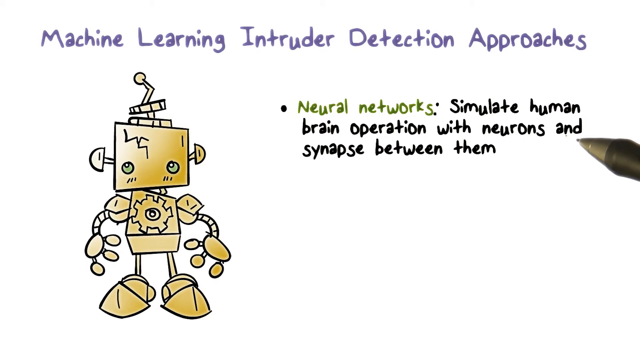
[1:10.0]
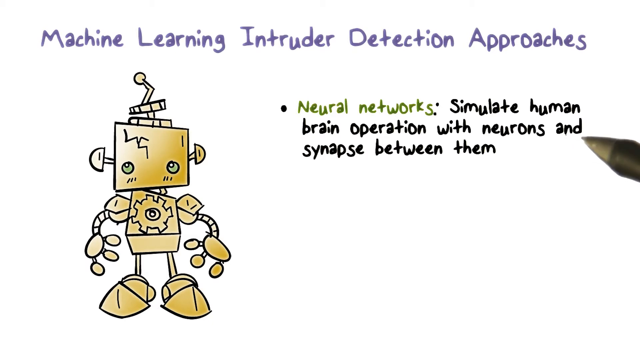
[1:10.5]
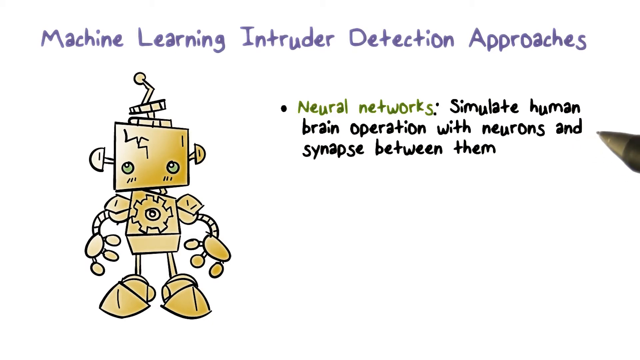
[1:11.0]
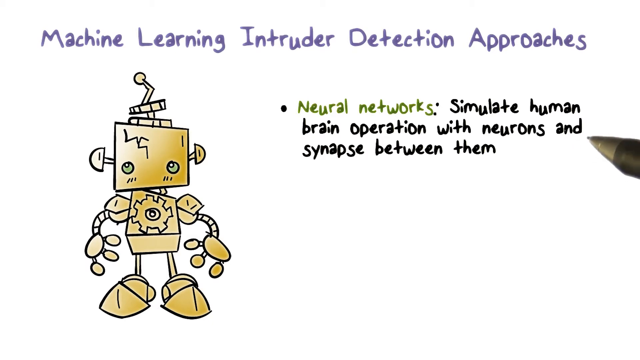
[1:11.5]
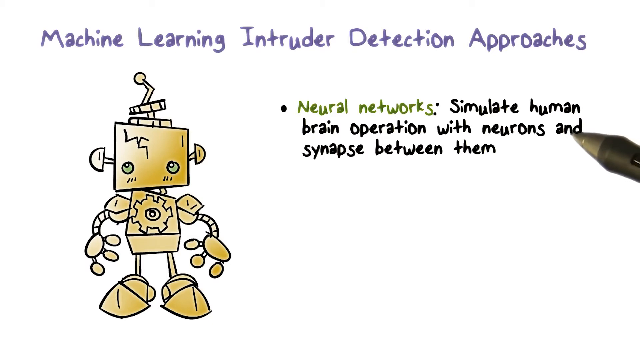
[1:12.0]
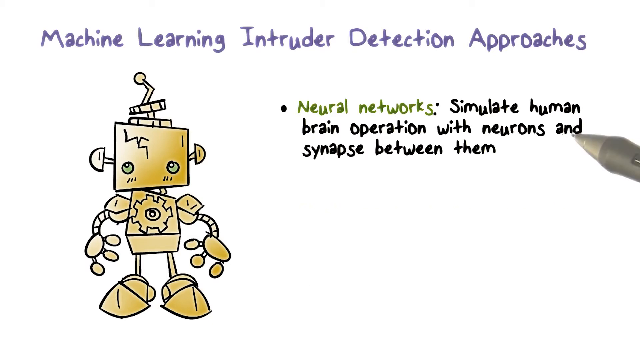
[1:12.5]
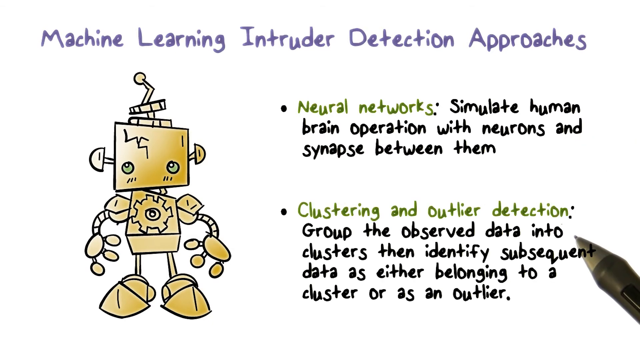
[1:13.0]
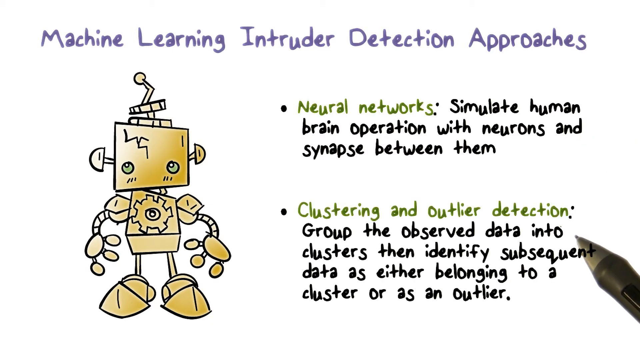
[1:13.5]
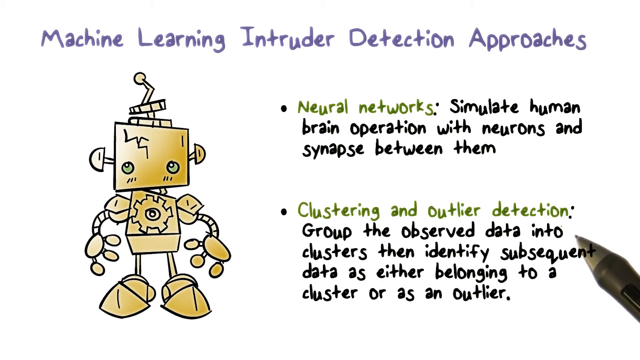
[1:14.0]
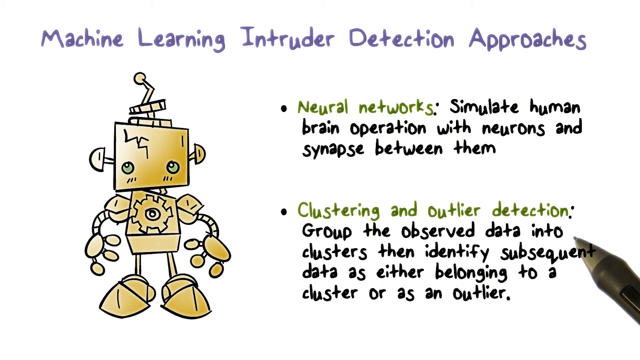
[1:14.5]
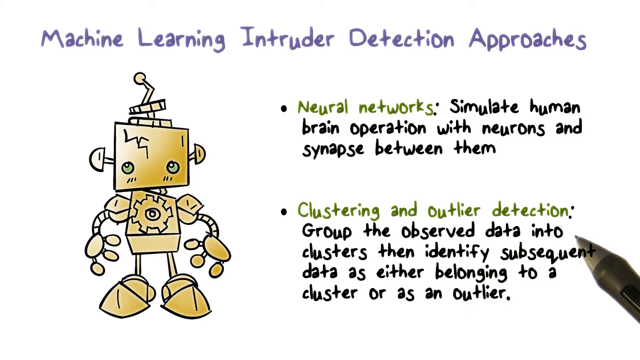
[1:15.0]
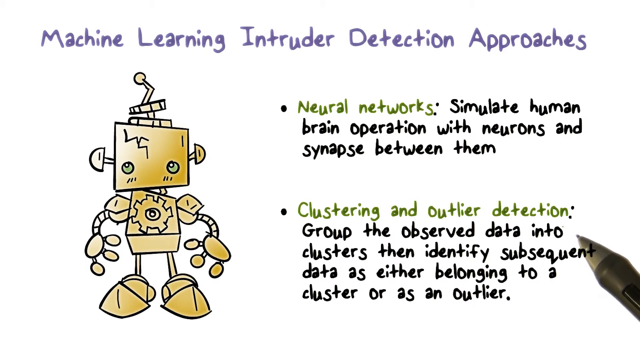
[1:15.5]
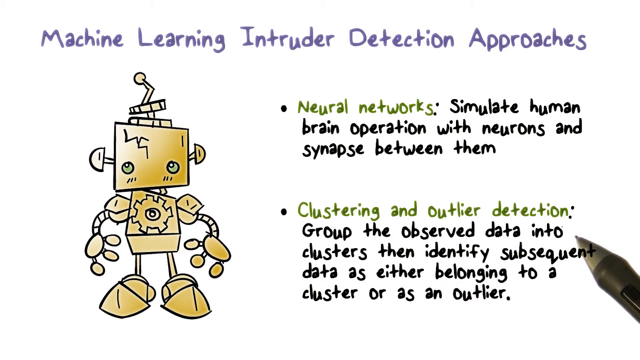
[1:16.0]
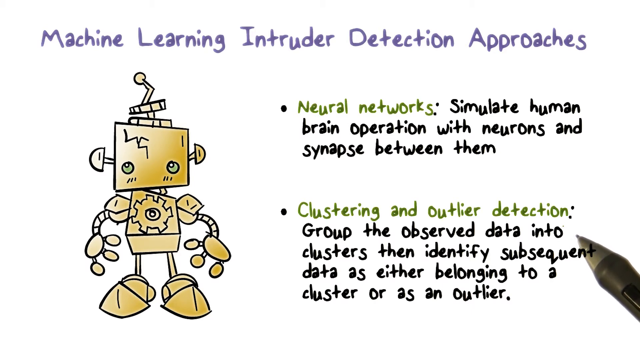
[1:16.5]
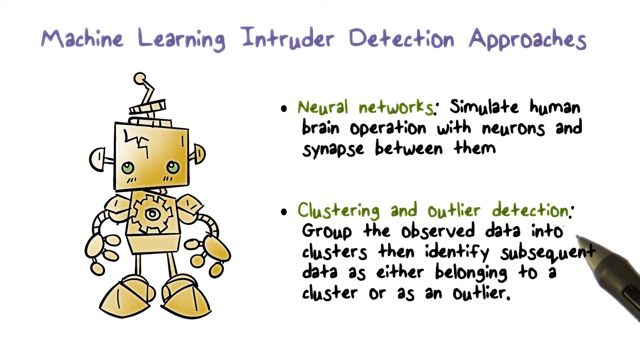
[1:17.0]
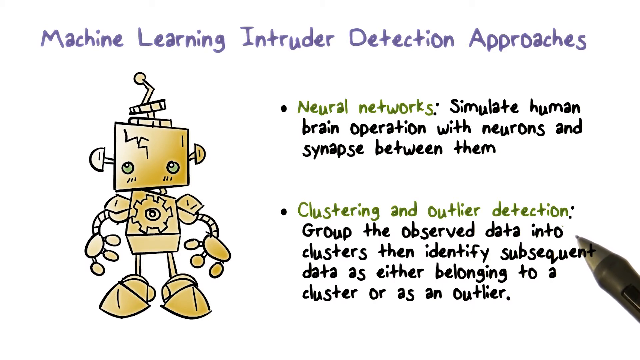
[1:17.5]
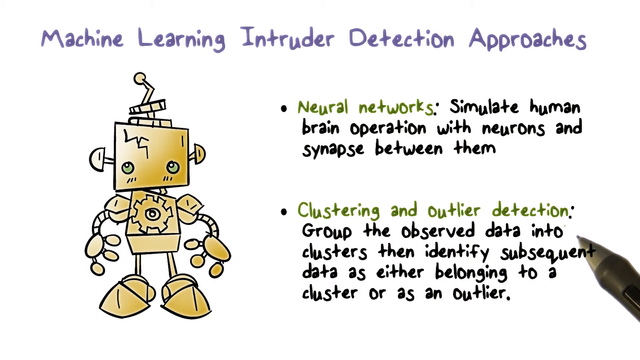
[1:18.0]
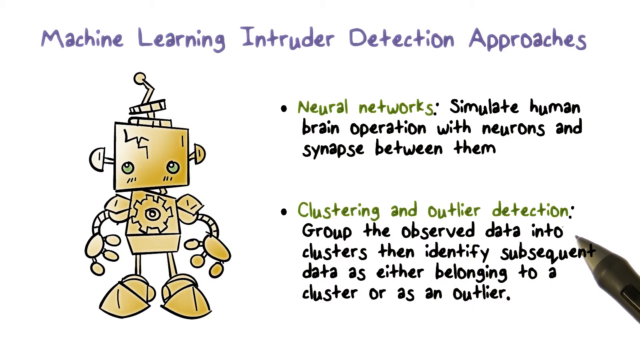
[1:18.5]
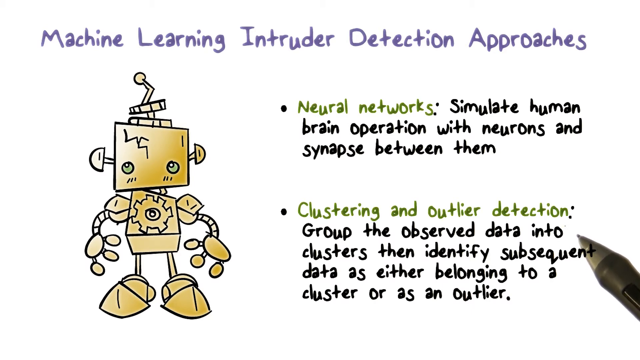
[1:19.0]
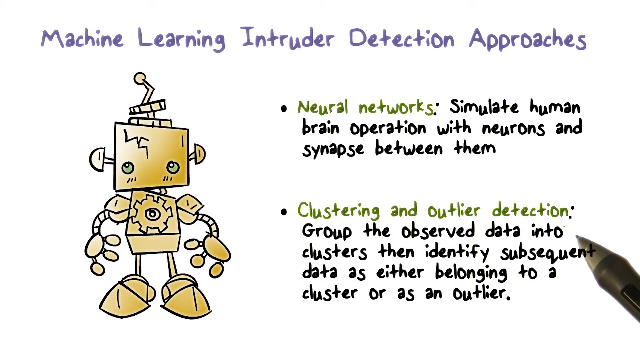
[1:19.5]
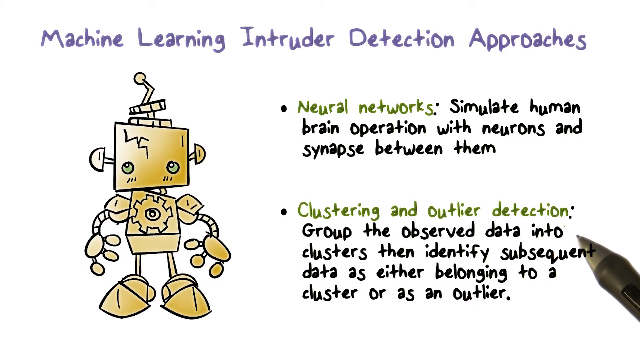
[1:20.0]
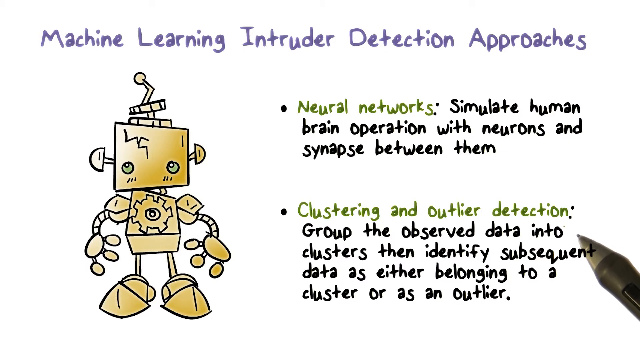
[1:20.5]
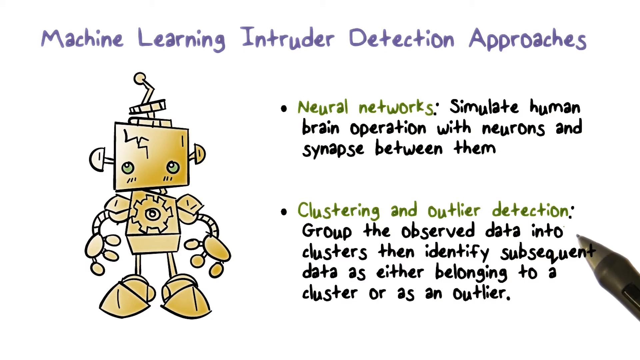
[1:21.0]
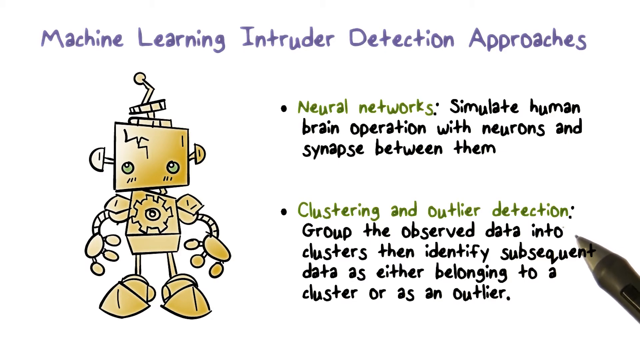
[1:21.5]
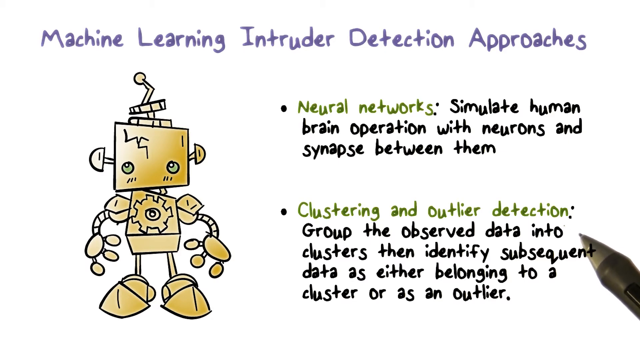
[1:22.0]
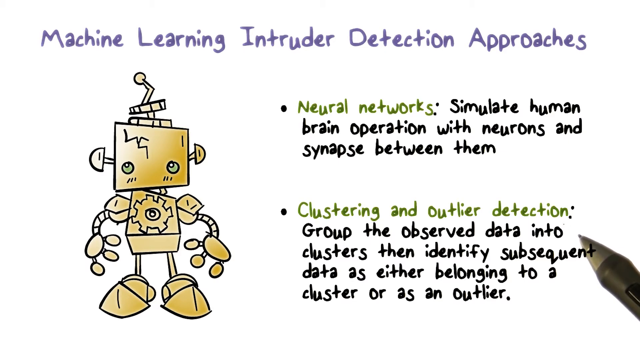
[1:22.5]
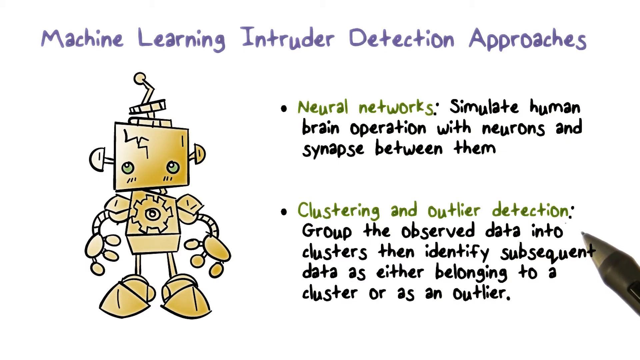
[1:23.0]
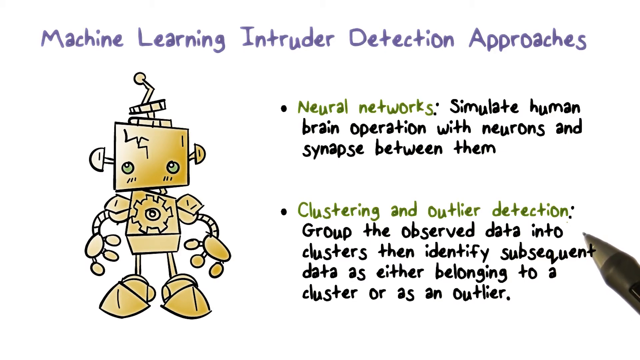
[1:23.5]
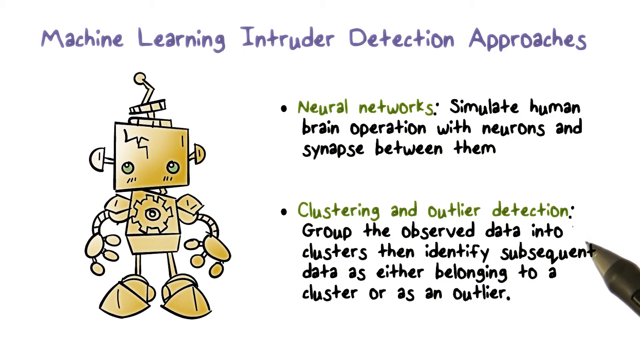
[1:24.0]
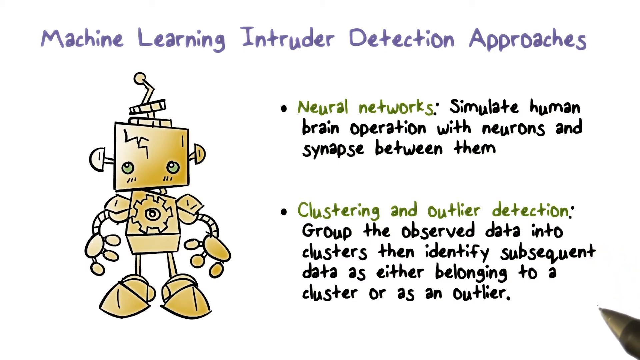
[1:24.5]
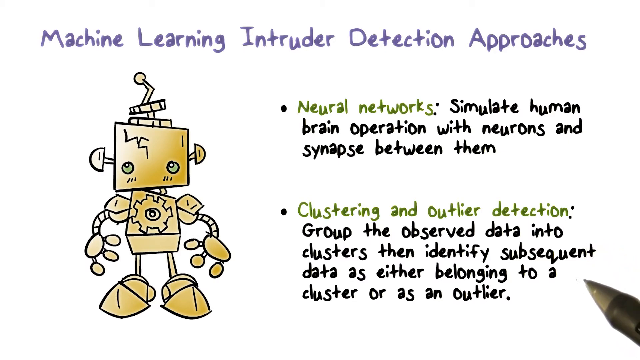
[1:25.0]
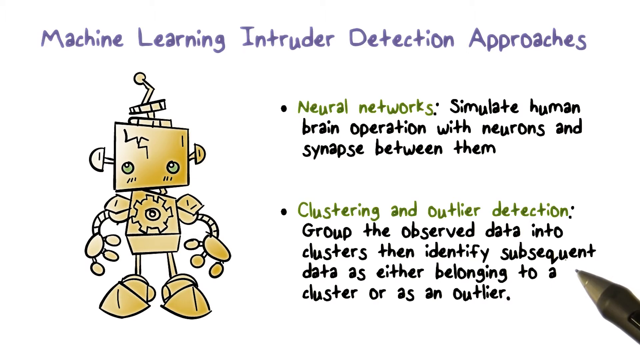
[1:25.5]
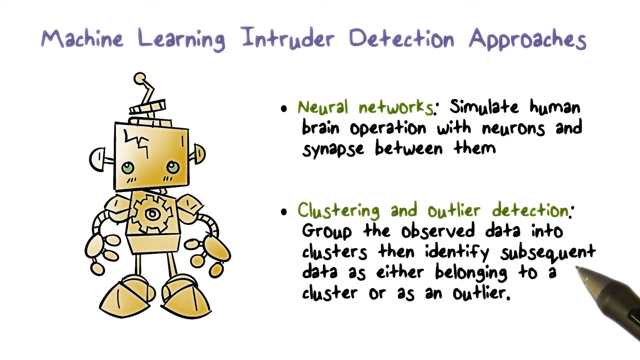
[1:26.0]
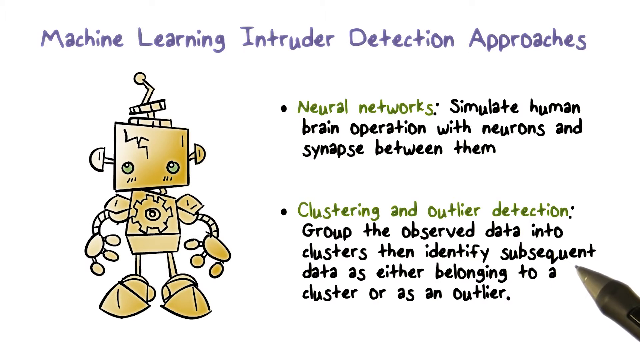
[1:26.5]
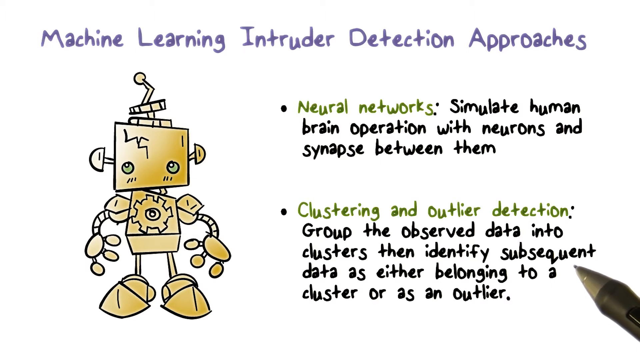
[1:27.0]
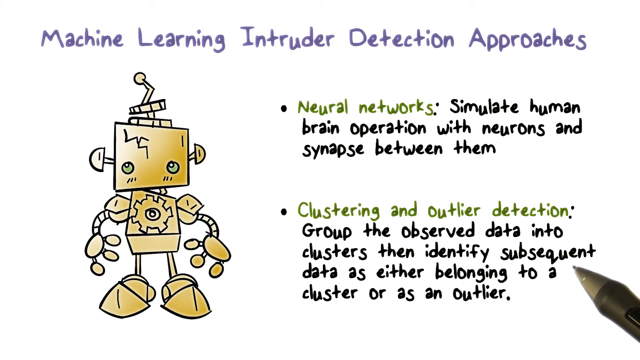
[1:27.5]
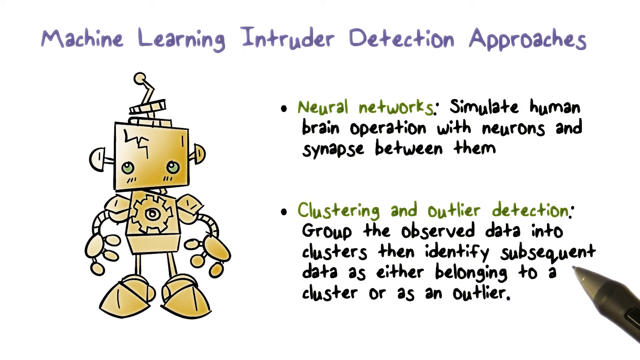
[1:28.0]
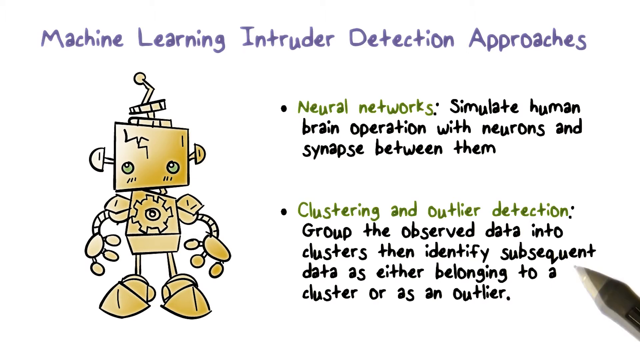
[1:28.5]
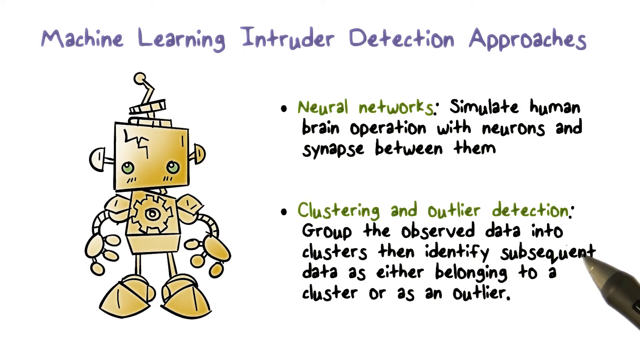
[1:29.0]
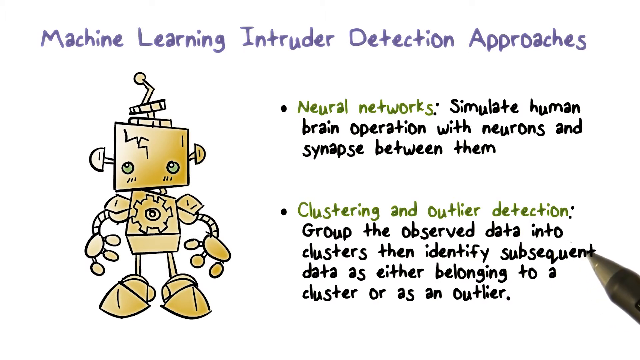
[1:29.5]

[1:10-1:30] The character remains on the left side. The pen writes a bullet with "neural network" in green, a semicolon, and the rest in black: "simulate human brain operation with neurons and synapses between them." The next bullet has "clustering and outlier detection" in green with a semicolon, and then in black: "group and observe data into clusters and identify subsequent data as either belonging to a cluster or as an outlier." The pen moves toward the right, and the word "subsequent" seems to be on top of the pen, with the pen appearing to be underneath that wording. The pen then goes back up and points toward the first column, moving slightly up and down, hovering over the word "and" in the top bullet and over the word "into" in the second bullet. The pen goes up and touches that word and moves slightly, then comes down to the lower right corner, where it again moves slightly. The words along the top remain in purple.